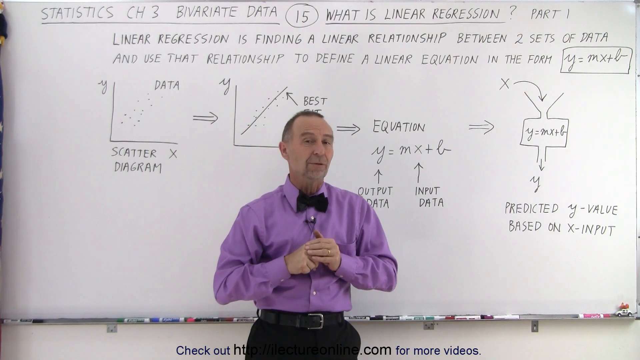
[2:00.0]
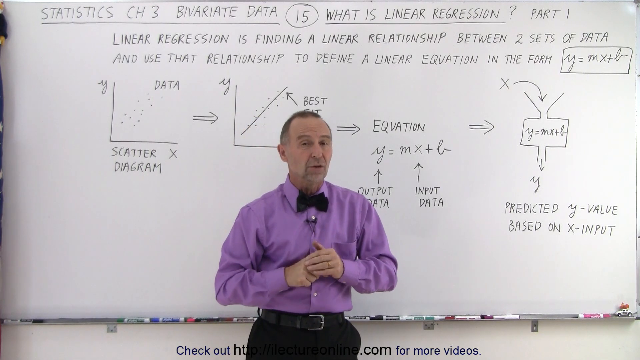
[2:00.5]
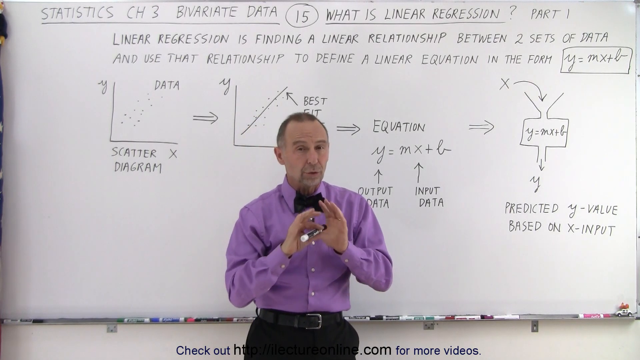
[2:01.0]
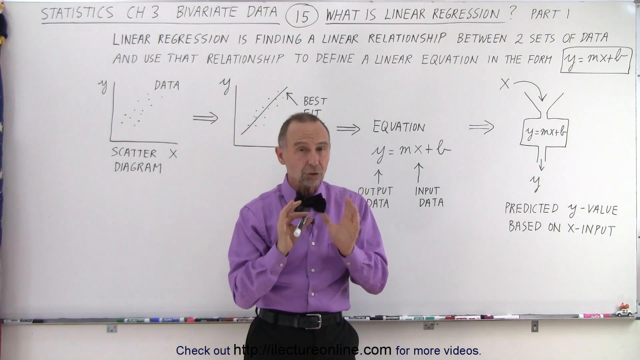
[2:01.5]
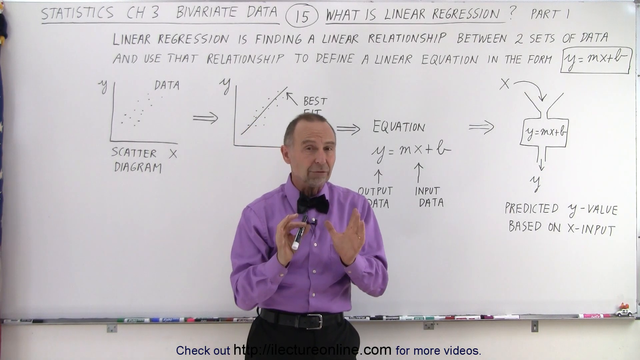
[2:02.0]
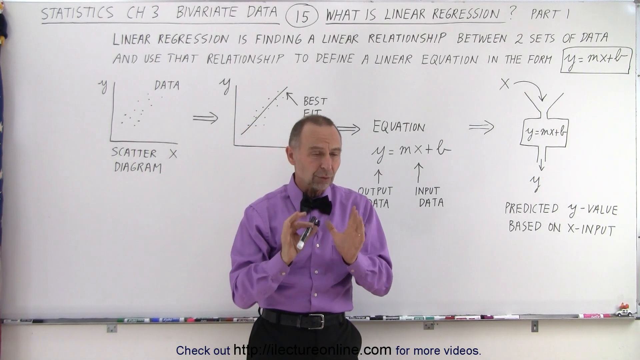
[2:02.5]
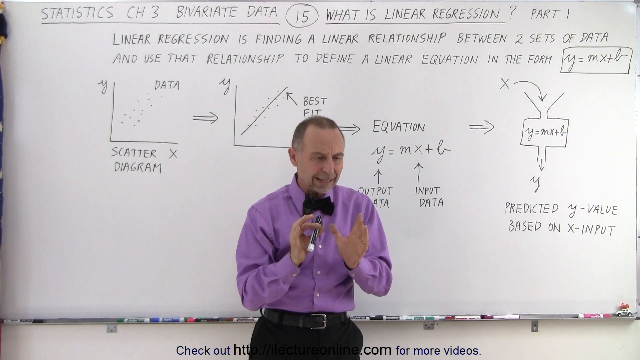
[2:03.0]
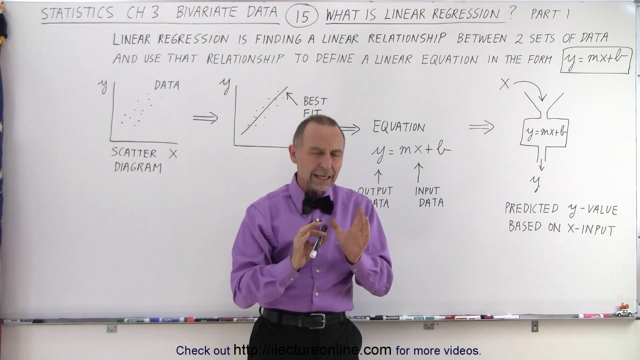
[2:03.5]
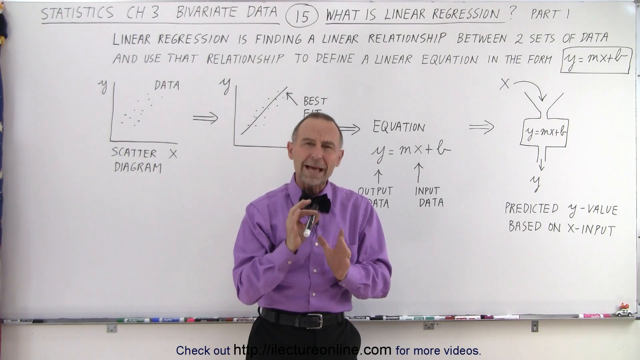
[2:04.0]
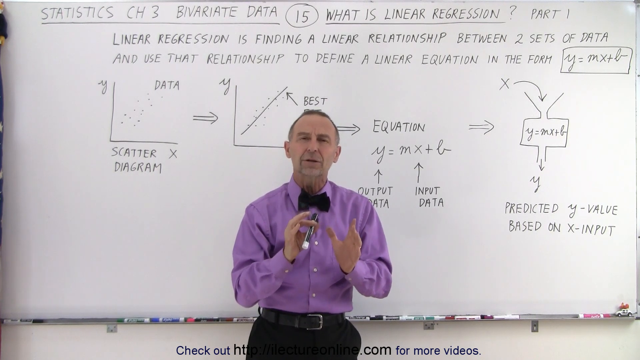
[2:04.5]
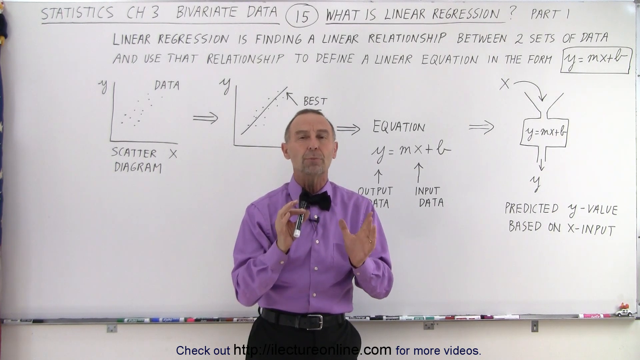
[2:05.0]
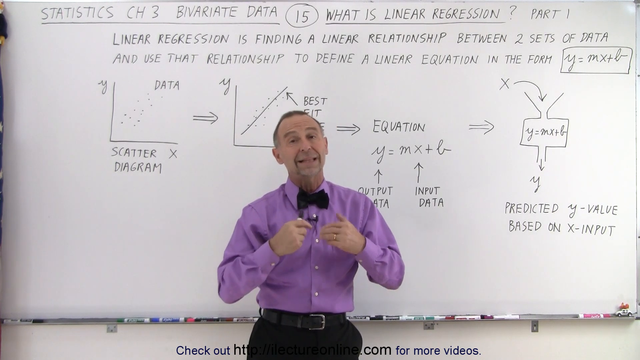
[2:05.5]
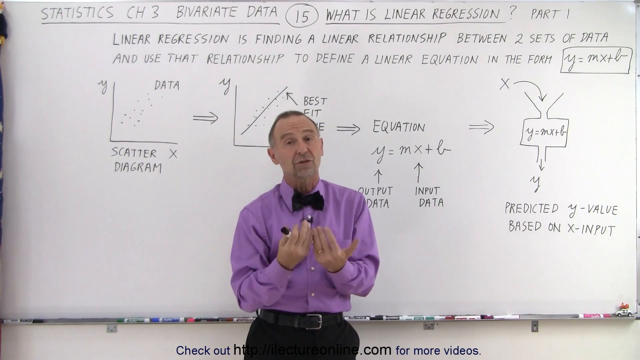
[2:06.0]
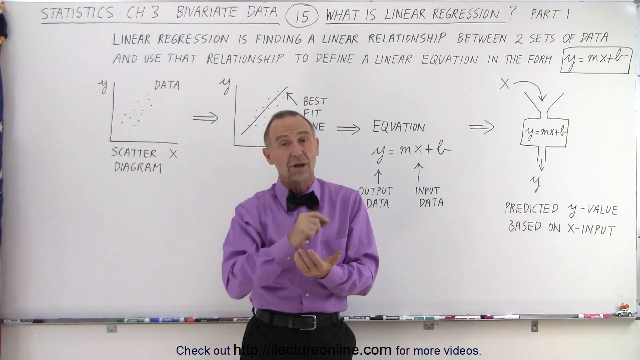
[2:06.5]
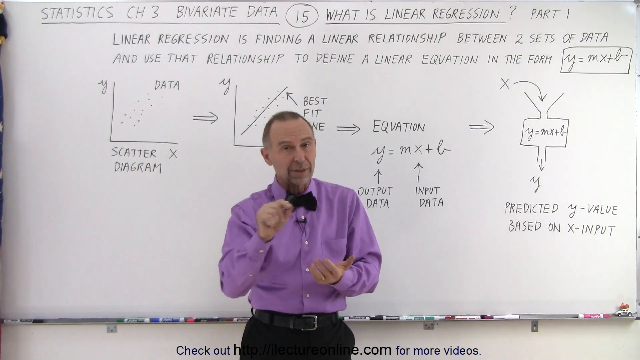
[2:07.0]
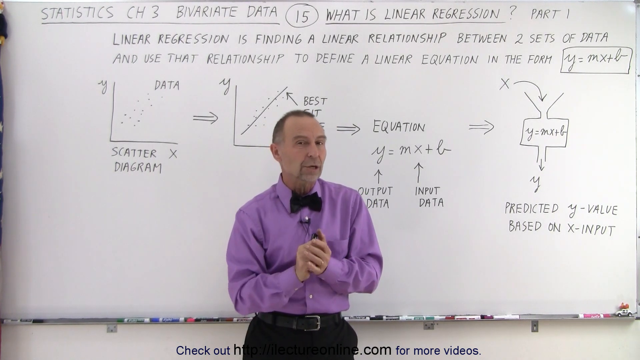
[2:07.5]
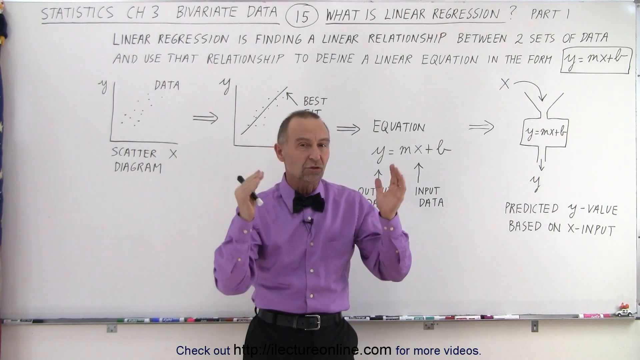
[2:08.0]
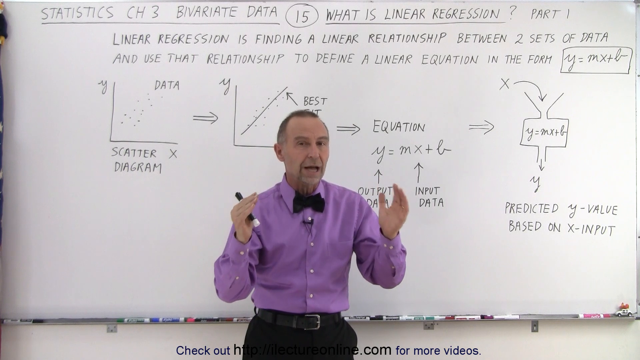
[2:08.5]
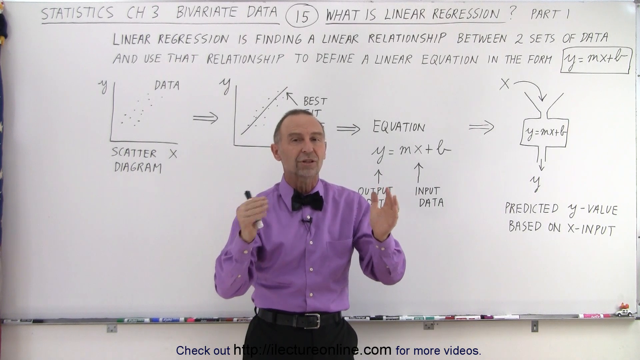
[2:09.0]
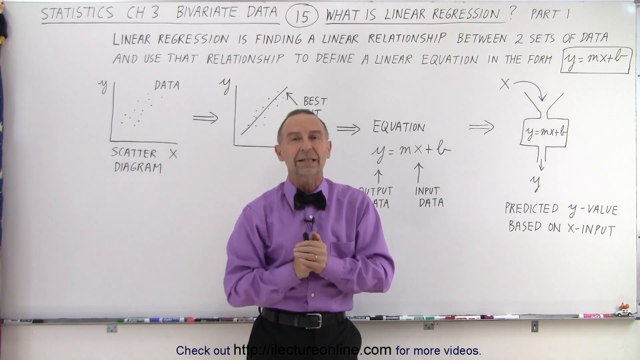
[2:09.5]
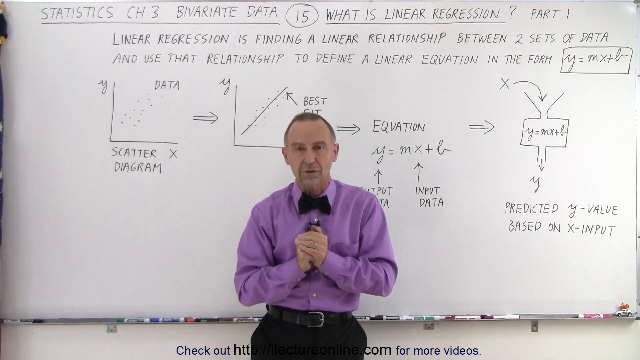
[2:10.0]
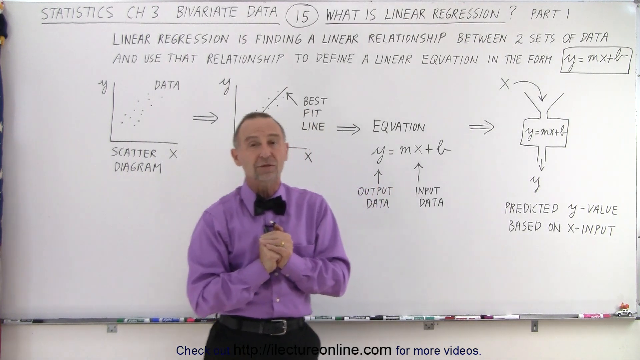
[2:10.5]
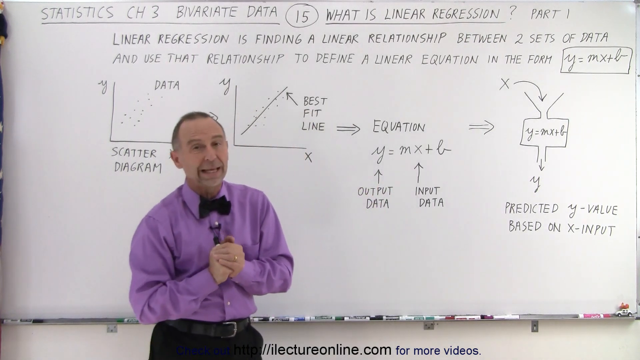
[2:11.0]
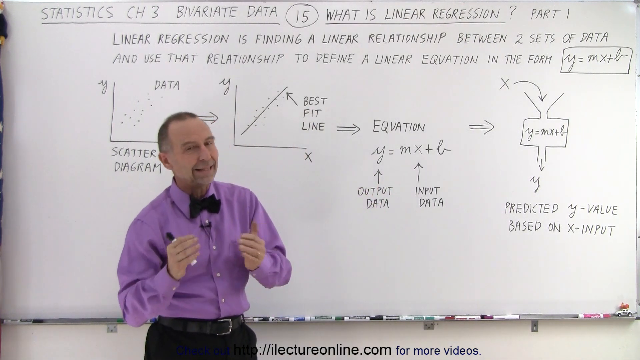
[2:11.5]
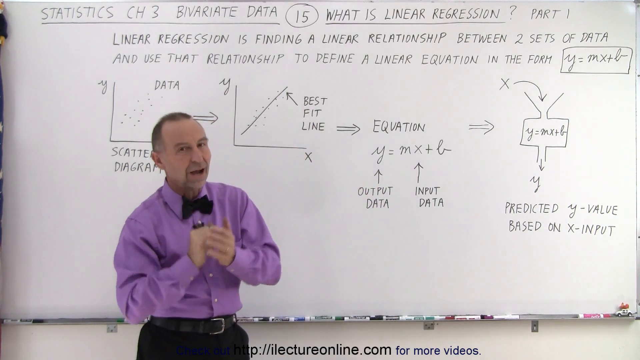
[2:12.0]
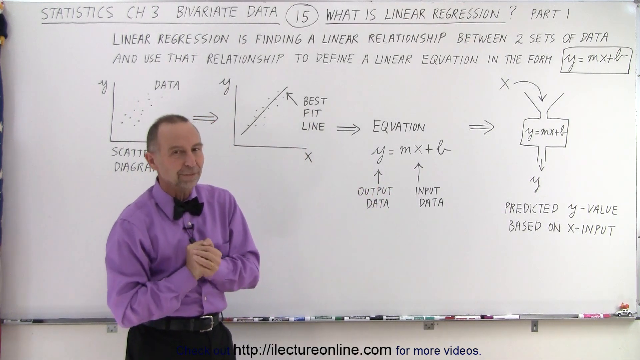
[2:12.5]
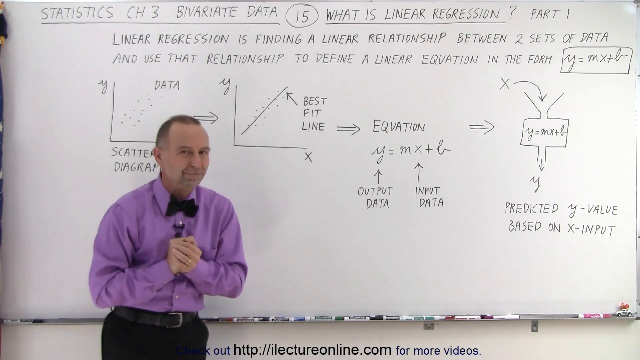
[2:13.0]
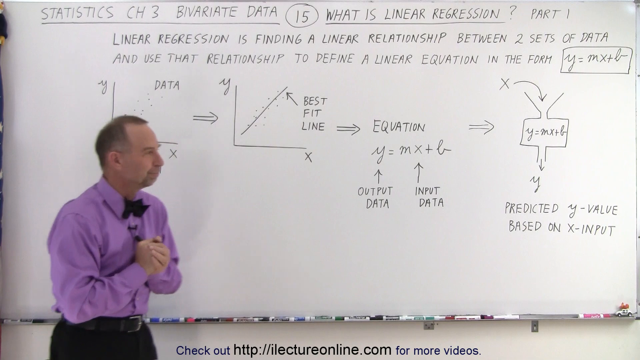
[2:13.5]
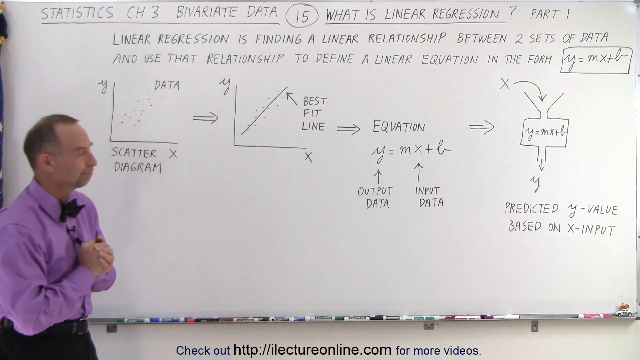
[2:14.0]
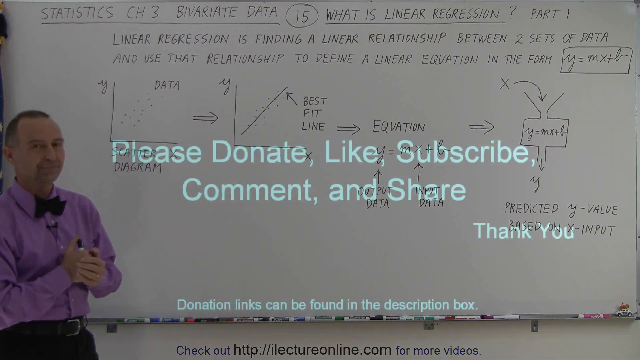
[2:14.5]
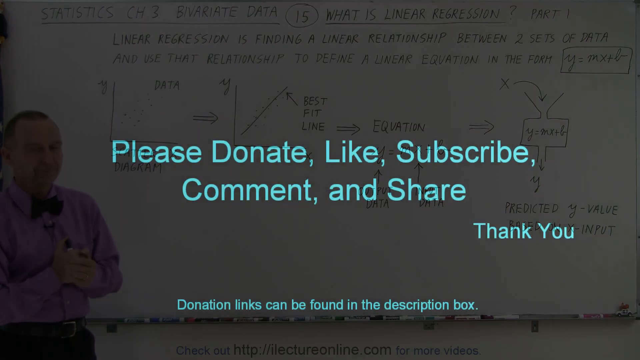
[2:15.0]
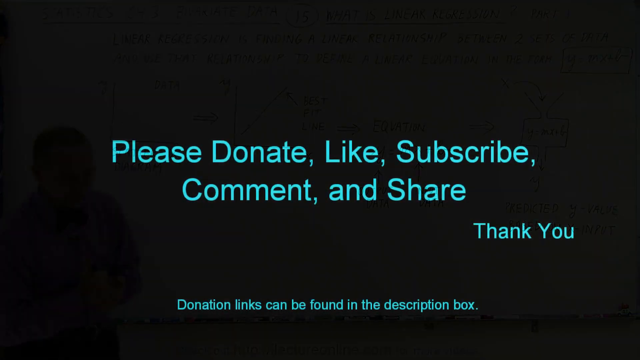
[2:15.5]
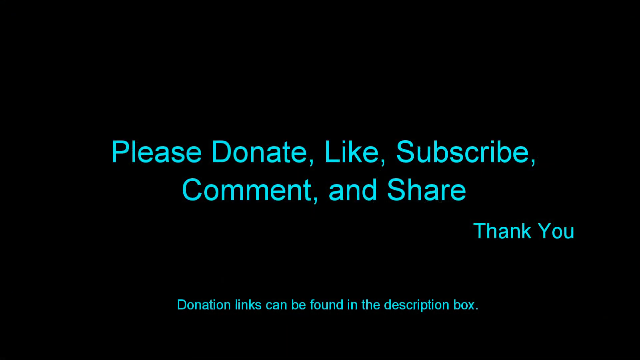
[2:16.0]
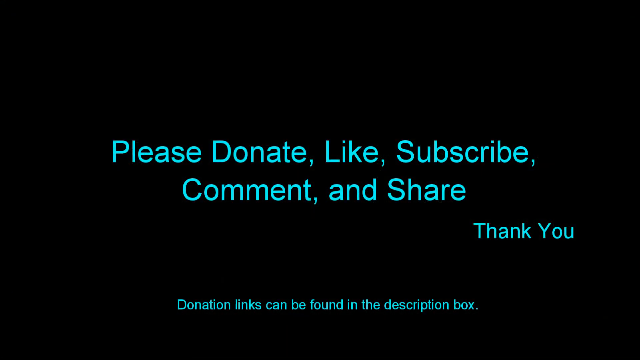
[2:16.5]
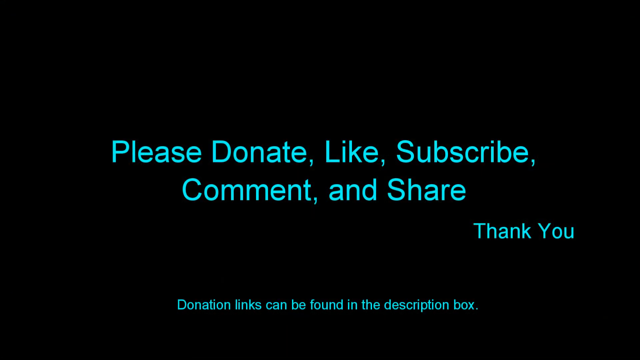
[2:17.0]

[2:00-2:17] The view is still zoomed out. The setting and the writing on the board remain unchanged; the lecturer adds no further explanations and erases nothing. He does not move around much, only an inch back and forth. The markers on the board stay in the same positions without being moved. He keeps his composure and keeps teaching, neither writing nor erasing, only using his hands to indicate the section he is explaining.